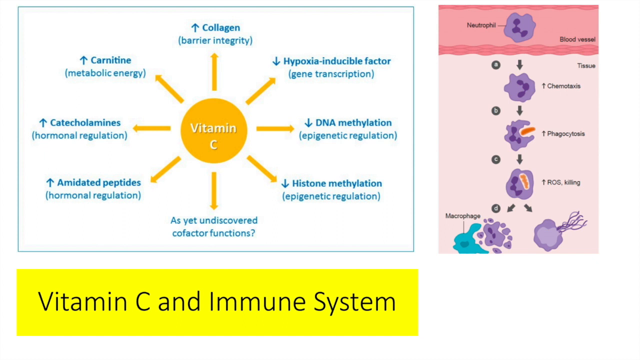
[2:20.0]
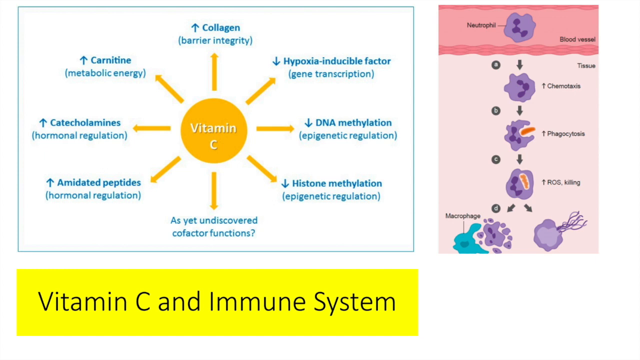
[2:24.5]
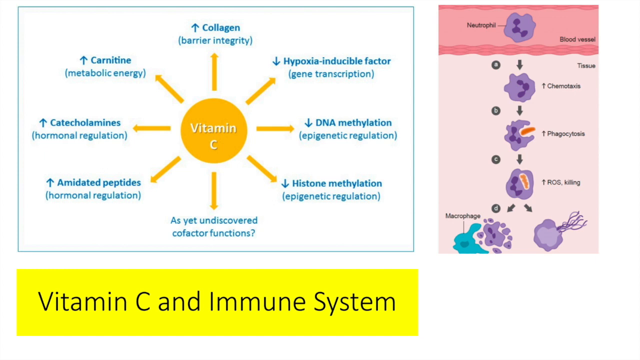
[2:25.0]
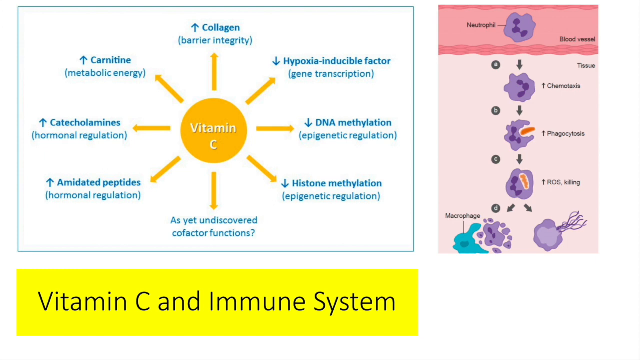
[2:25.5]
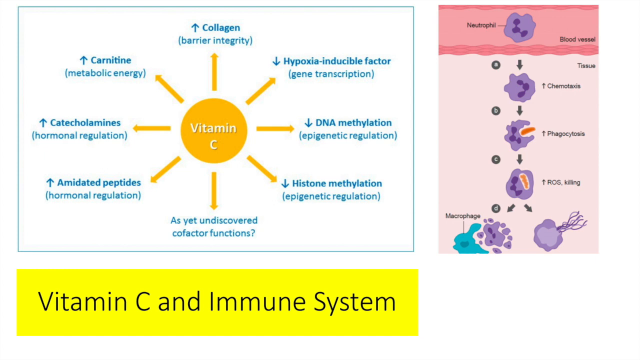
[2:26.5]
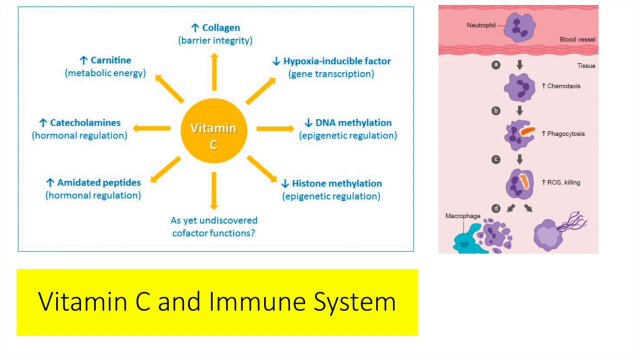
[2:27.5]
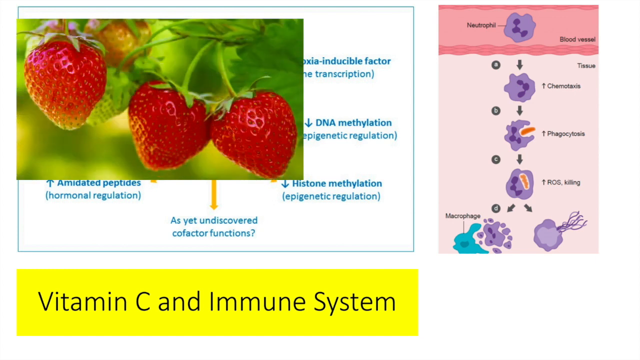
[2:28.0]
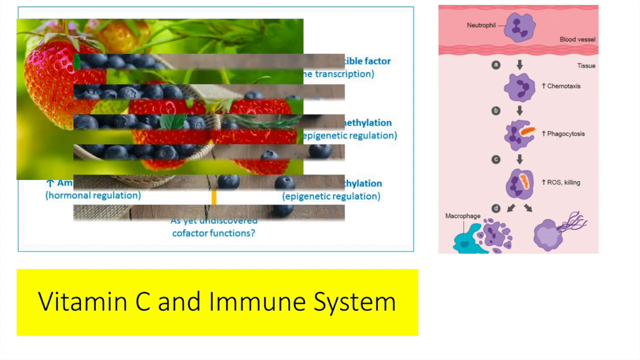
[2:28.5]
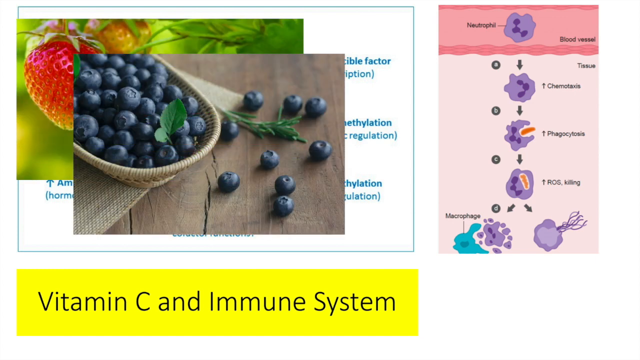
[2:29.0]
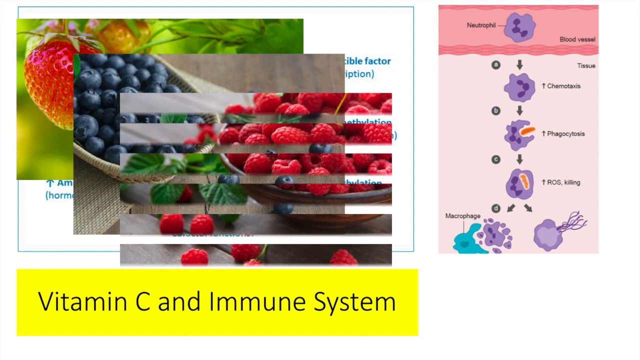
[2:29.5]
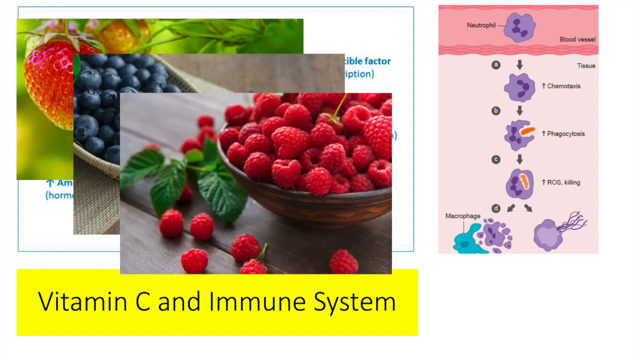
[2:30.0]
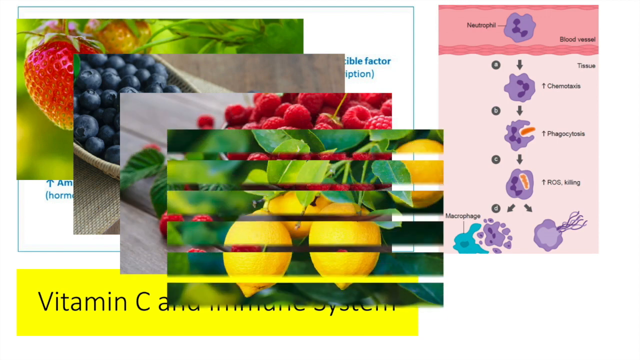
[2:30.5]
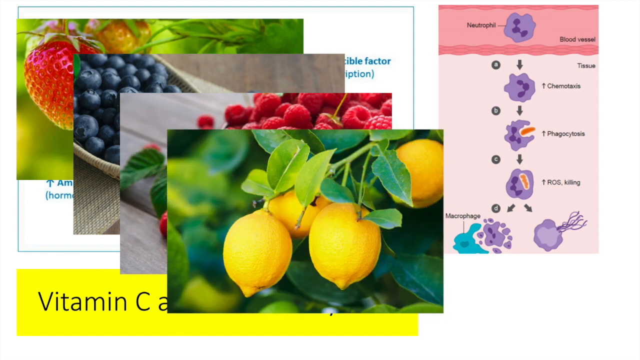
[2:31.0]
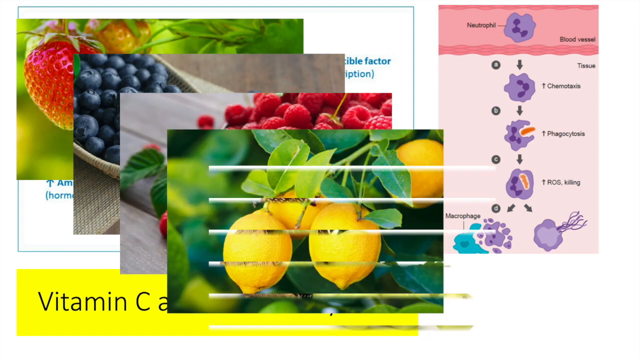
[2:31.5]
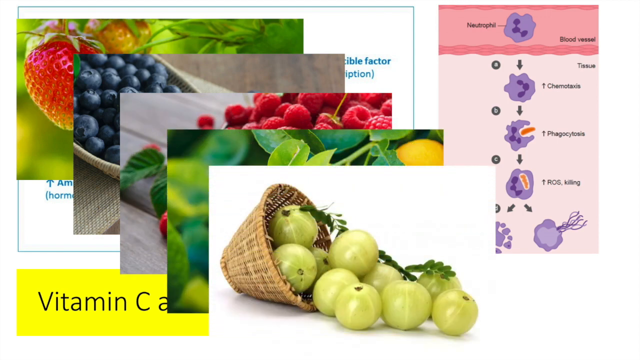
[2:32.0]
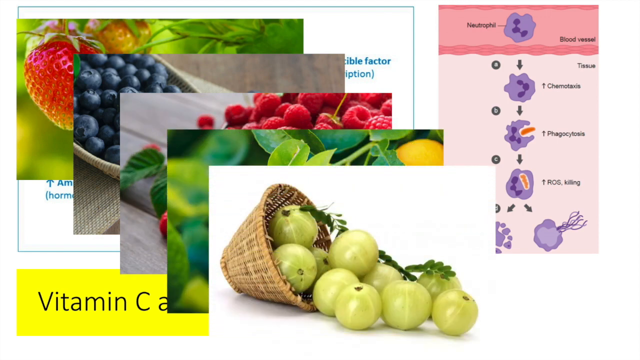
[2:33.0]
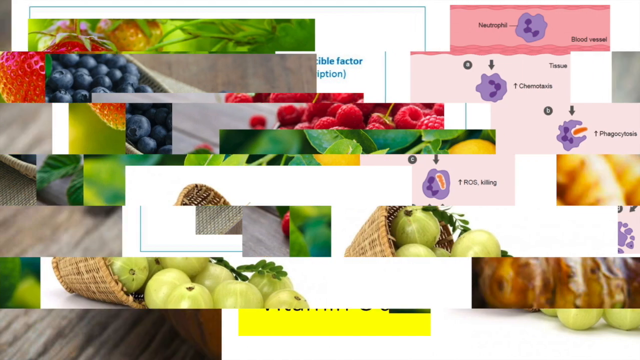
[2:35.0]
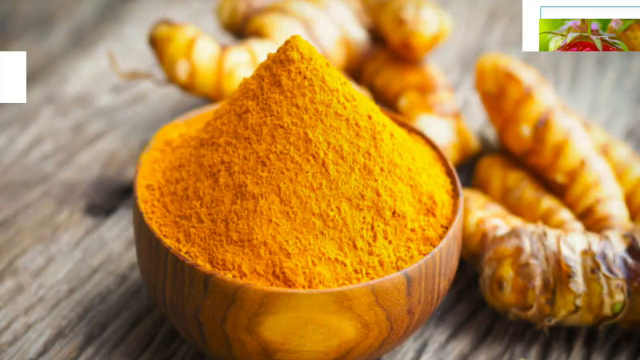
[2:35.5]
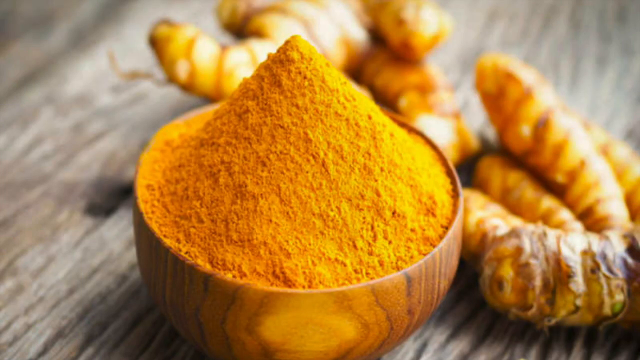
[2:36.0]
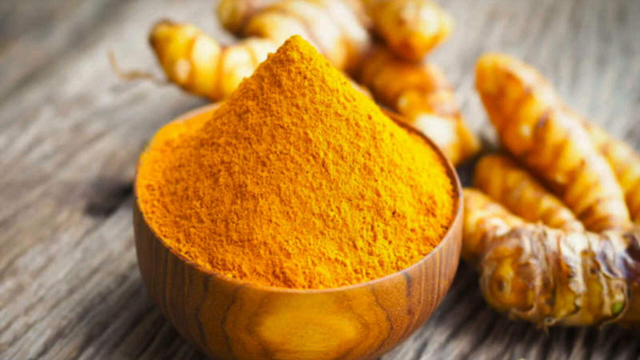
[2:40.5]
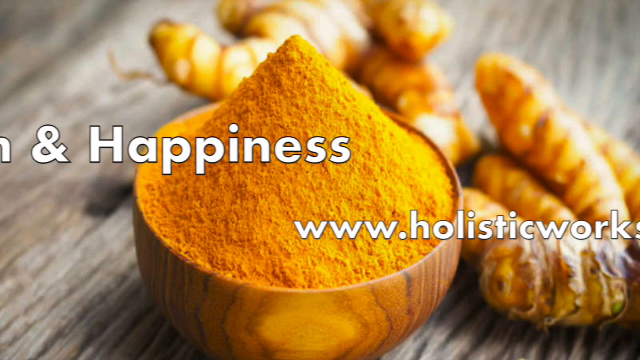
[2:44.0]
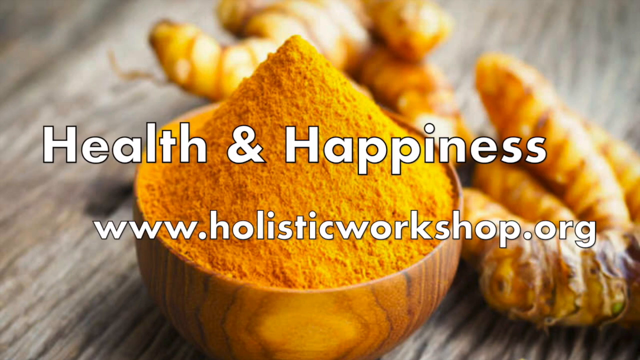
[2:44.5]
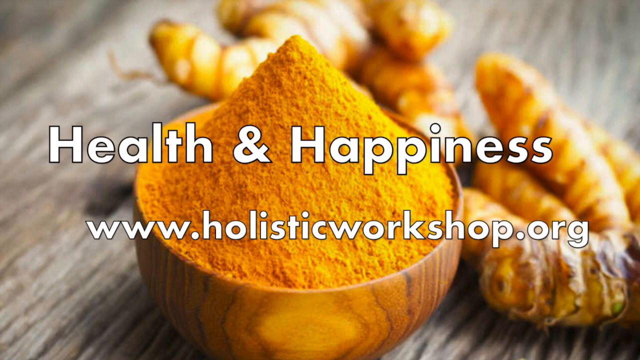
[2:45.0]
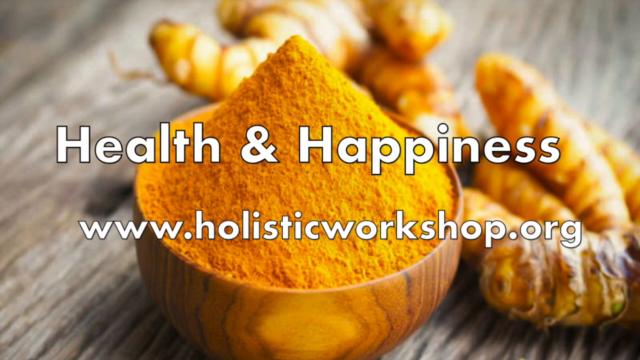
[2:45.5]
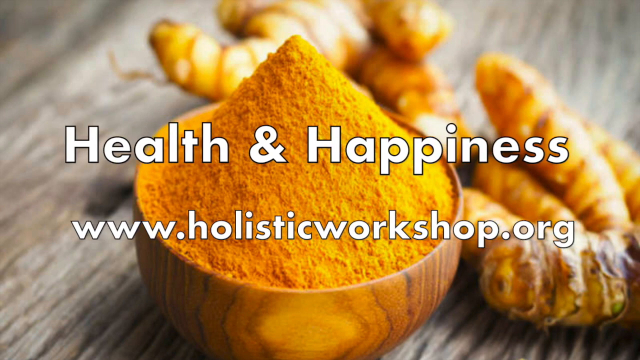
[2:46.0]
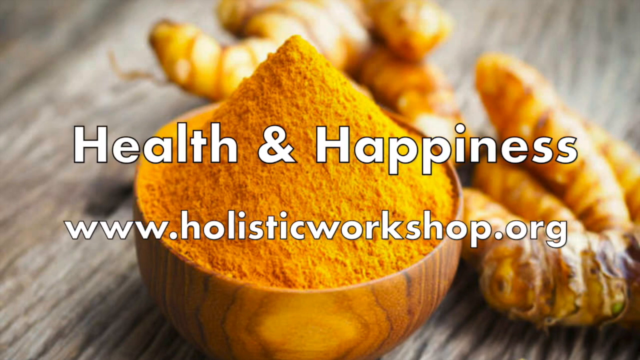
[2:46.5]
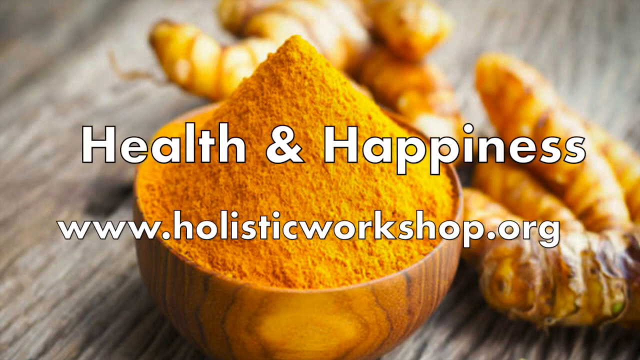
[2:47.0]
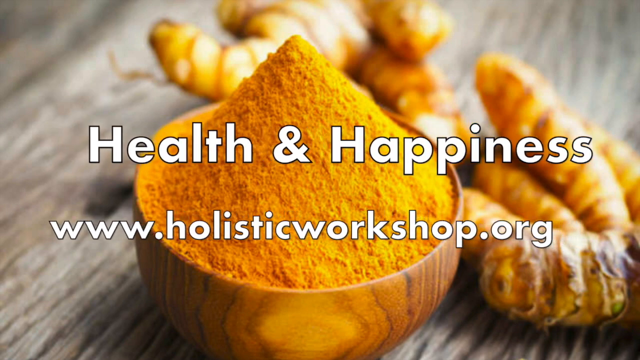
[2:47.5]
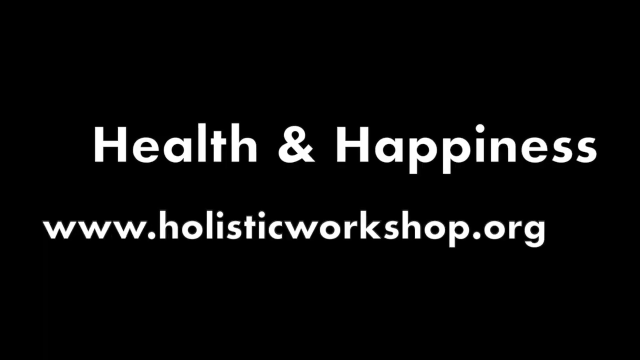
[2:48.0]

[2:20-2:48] A still picture on an entirely white background contains two separate charts. The larger chart is on the left, taking up about two-thirds of the screen's width and about 55% of its height. Its main feature is the word "vitamin C" in white letters inside a yellow sphere. Eight equally spaced arrows emanate around the circumference of the sphere, pointing to text at their ends describing what is within vitamin C. The chart to the right is smaller in width. At its top is an object with a name attached on its left-hand side and another word on its right-hand side. Below it are three more objects, equally spaced, and at the bottom of the chart, below the last of these, there is one more object off to its left and another off to its right.